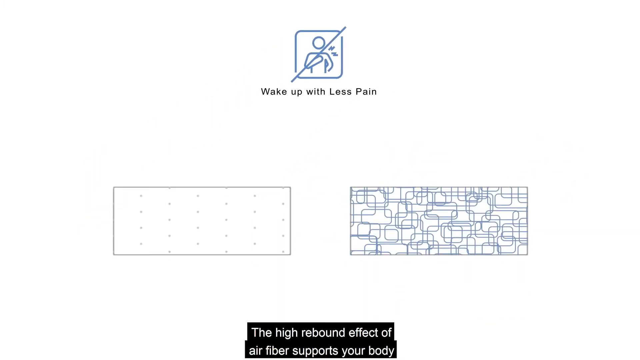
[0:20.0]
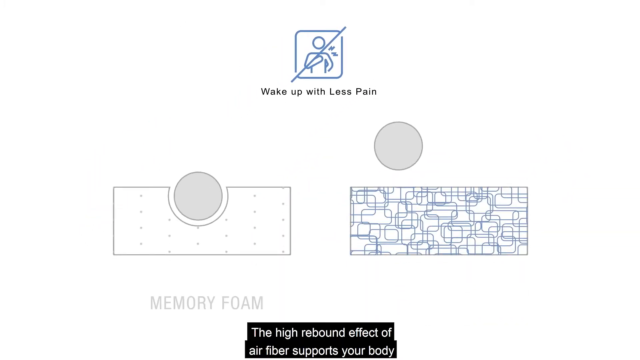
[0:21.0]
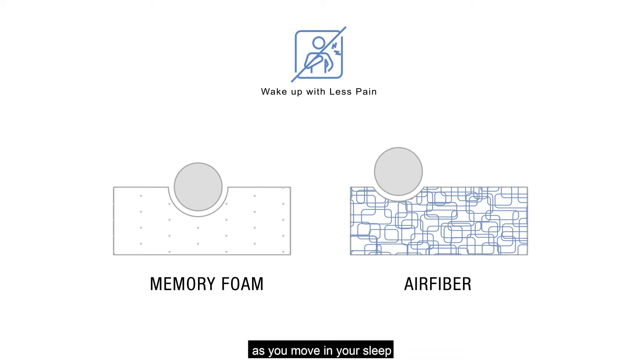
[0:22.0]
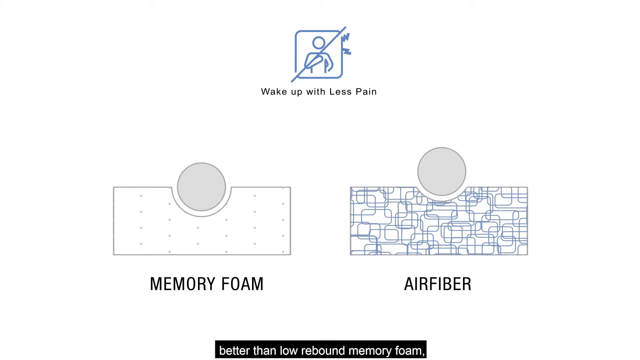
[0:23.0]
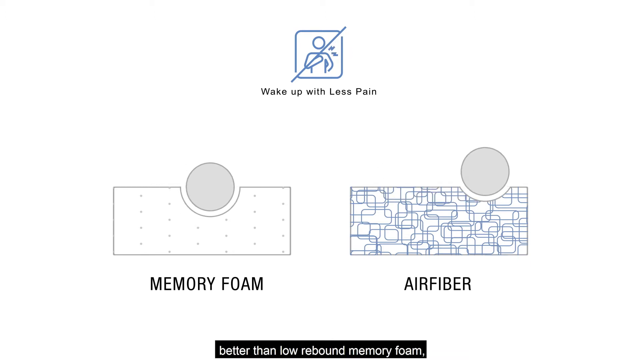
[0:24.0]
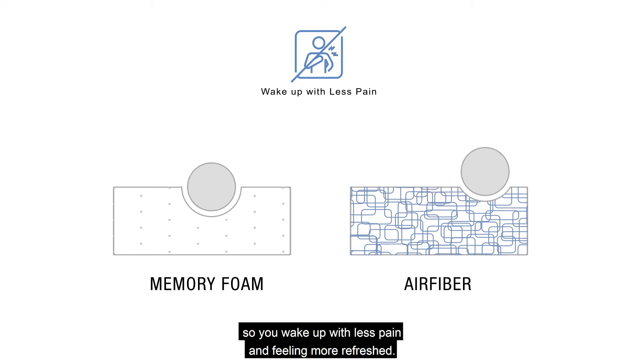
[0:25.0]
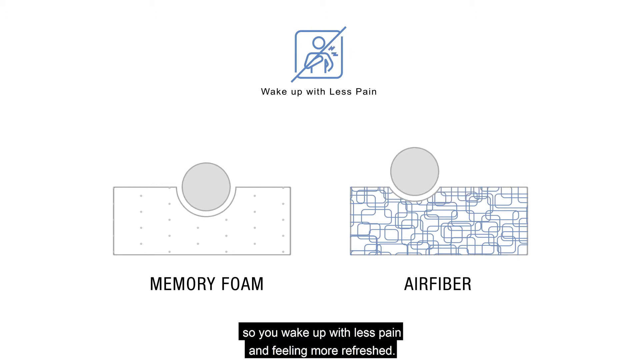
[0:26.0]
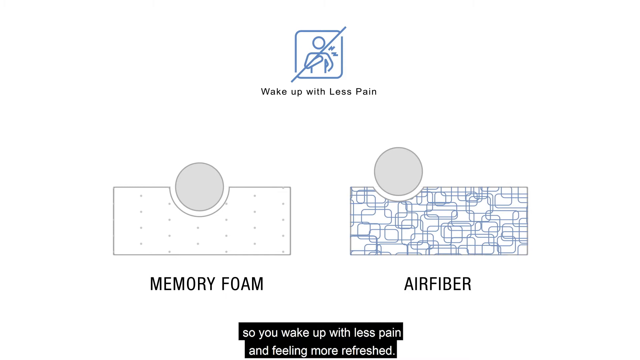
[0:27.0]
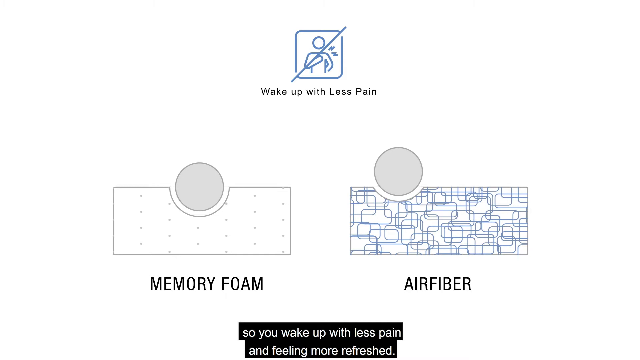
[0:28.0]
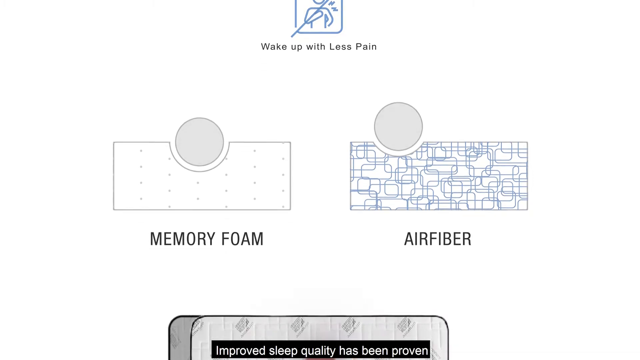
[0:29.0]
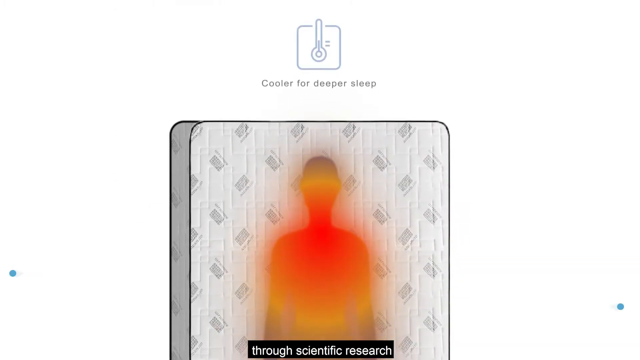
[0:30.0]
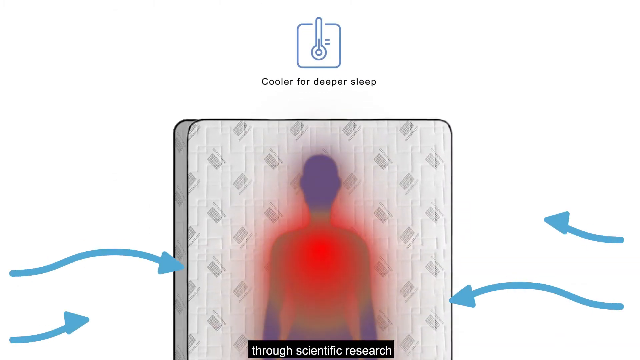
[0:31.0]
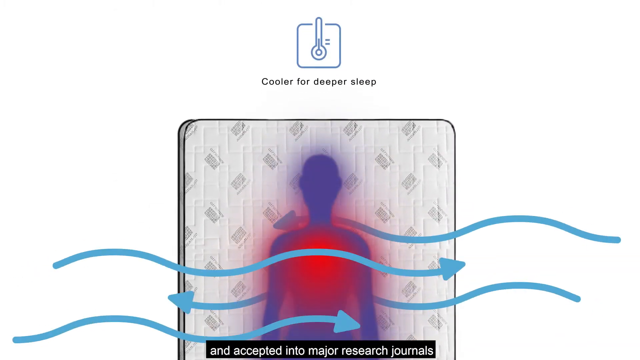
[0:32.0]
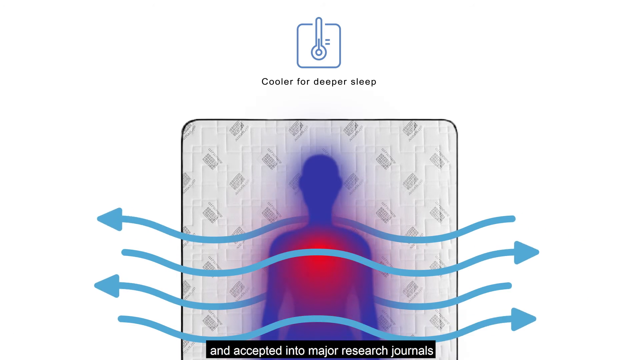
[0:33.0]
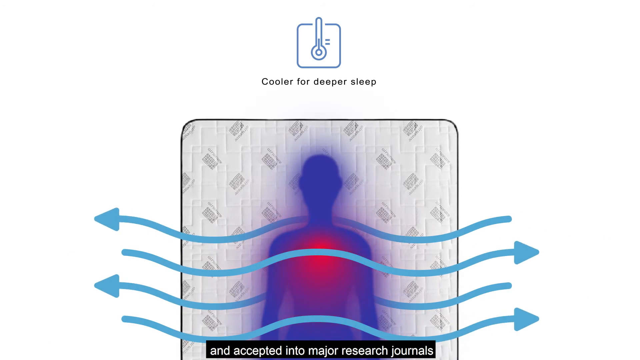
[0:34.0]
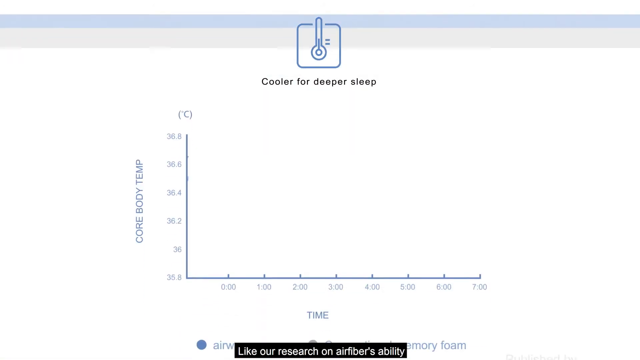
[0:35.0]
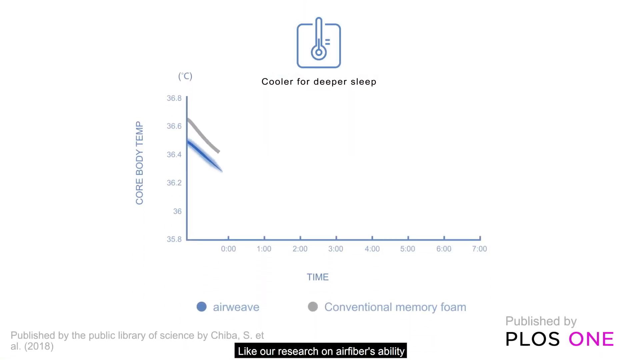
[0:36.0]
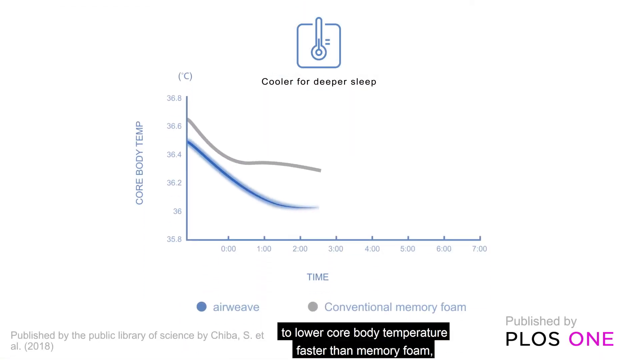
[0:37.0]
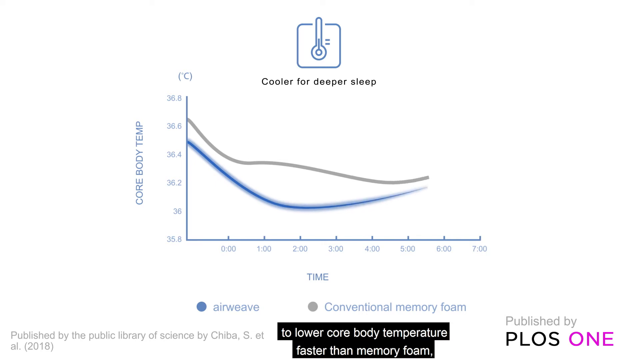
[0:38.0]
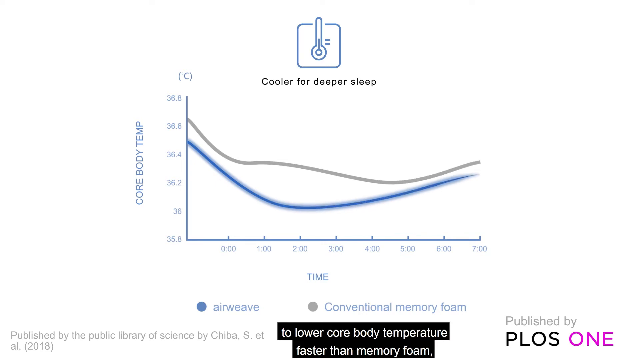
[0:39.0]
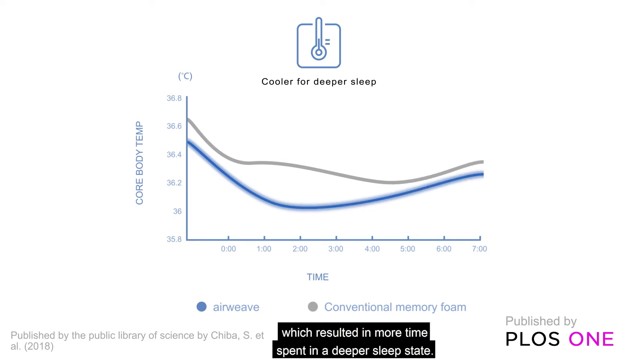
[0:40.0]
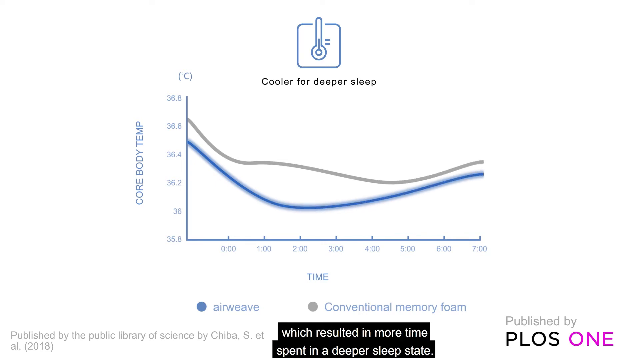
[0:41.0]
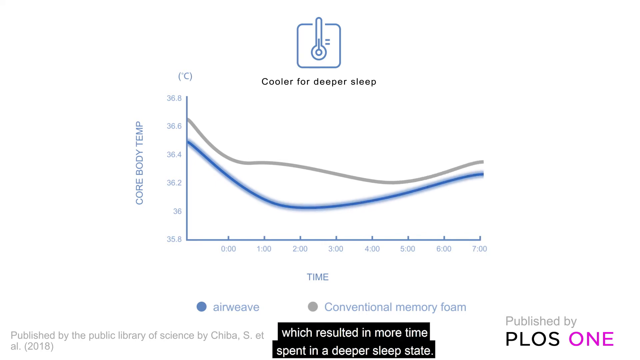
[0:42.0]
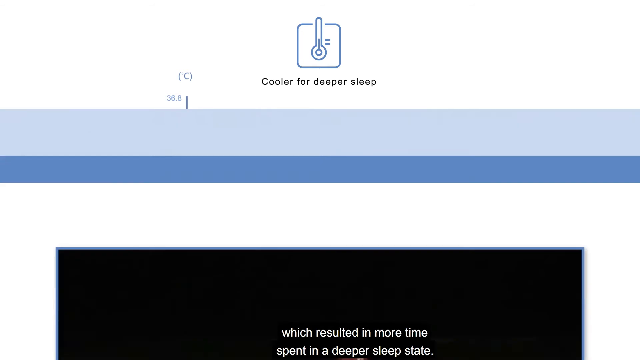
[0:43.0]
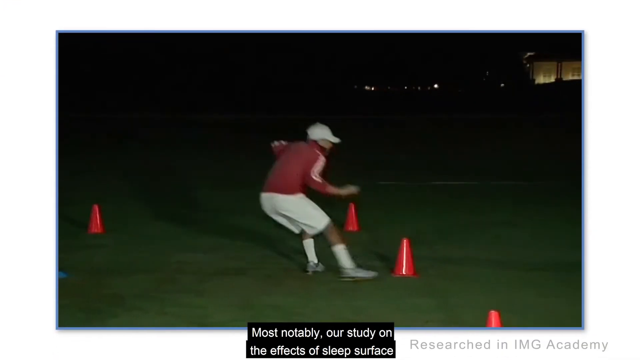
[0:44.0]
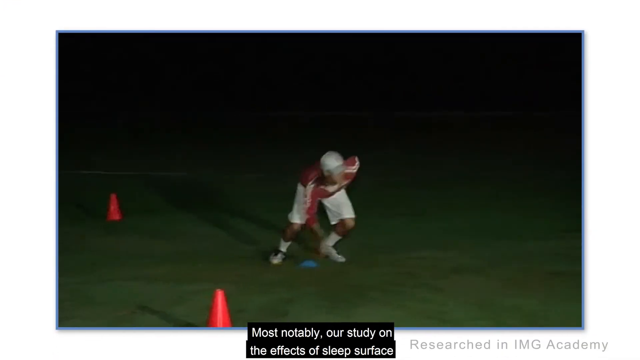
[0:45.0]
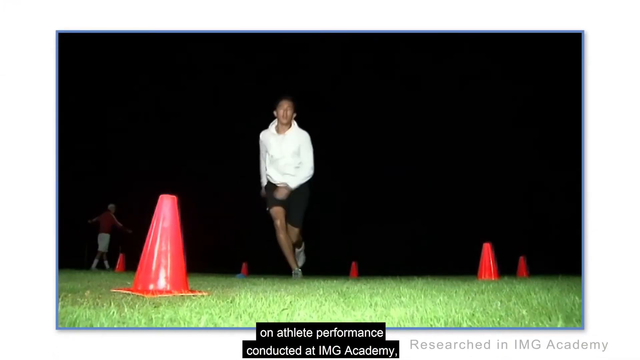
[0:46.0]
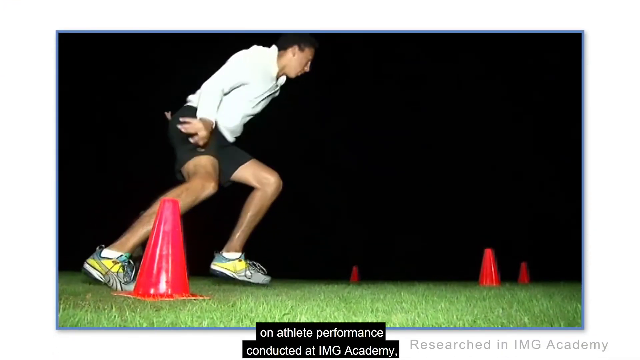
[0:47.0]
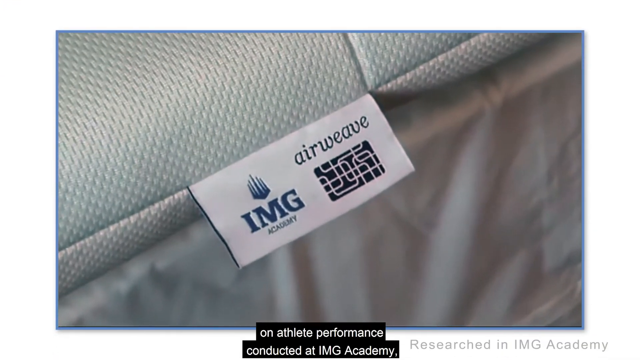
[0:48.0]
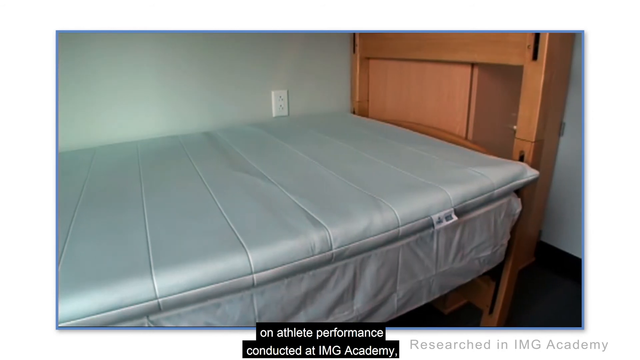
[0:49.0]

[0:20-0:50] On a white background, a symbol at the top looks like a square with the outline of a person inside, with lines that look like Z's surrounding the shoulder, apparently indicating that the shoulder is in pain. Underneath it, small black letters read "wake up with less pain." Below are two large, long rectangular boxes. The left box has a white background with small gray dots all over it, and black letters underneath read "memory foam." The right box has outlines of square and rectangular boxes completely covering the whole background, with "air fiber" underneath. Two gray balls drop down onto each of the mattress types and kind of roll around left and right; the ball on the memory foam mattress sinks down almost halfway, while the ball on the air fiber mattress sinks down only a little. The screen changes to a white background with a symbol at the top that looks like a square with a thermometer inside, and small black letters underneath reading "cooler for deeper sleep." Below is a graphic that looks like the top half of a mattress with the top half of a person shown as a dark purple silhouette of a man's body, and blue wavy lines coming from left and right, kind of flowing underneath and over the body. Next, a line chart appears with the label "core body temp" on the left side and "time" on the bottom axis. A key at the bottom shows a blue circle labeled "airweave" and a gray circle labeled "conventional memory foam." A blue line and a gray line are drawn on the graph in real time: the blue line has a steeper decline at first and then a slow rise, while the gray line has a less steep decline at first and then remains more horizontal and stable. The screen changes to a video of a green field where men do some type of drill, running to an orange cone on the ground, tapping it, then running back to another orange cone and tapping that; two different men do this exercise. Next is an image of a small rectangular tag hanging off a mattress, with the logos for IMG Academy and Airweave. The screen then changes to a video of a twin-size bed that looks like it has a light gray mat on top and gray sheets underneath, with a brown wooden frame, as the view pans across the bed from right to left.